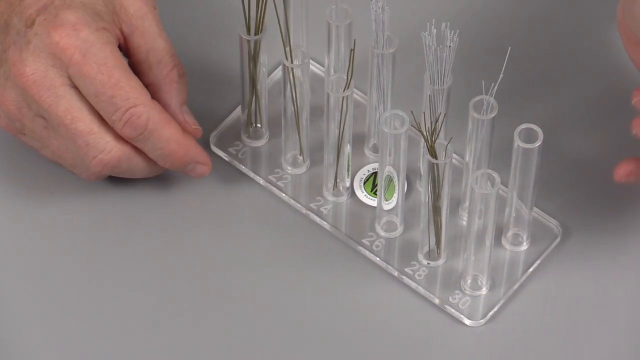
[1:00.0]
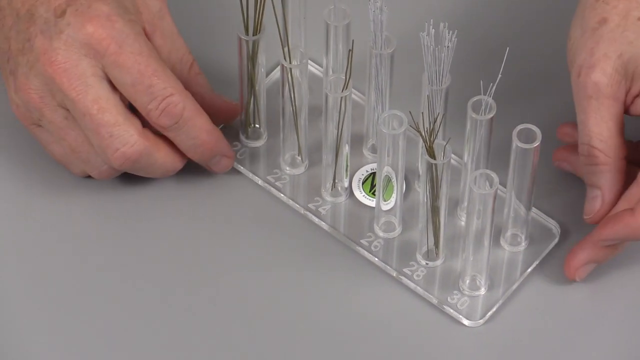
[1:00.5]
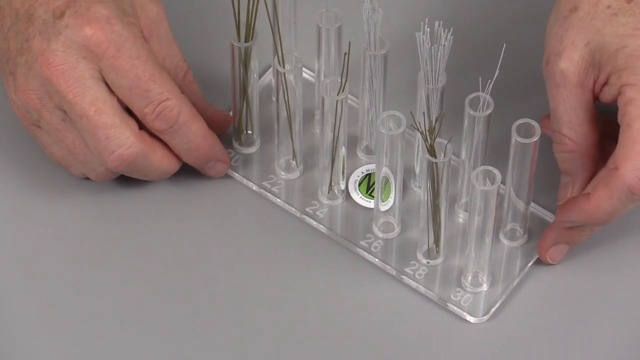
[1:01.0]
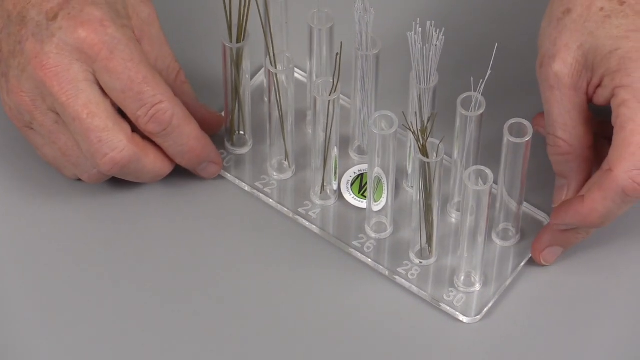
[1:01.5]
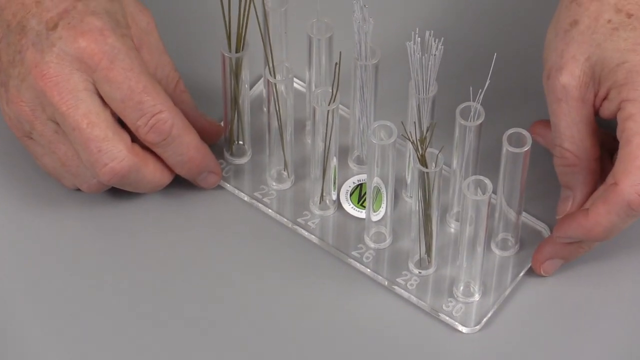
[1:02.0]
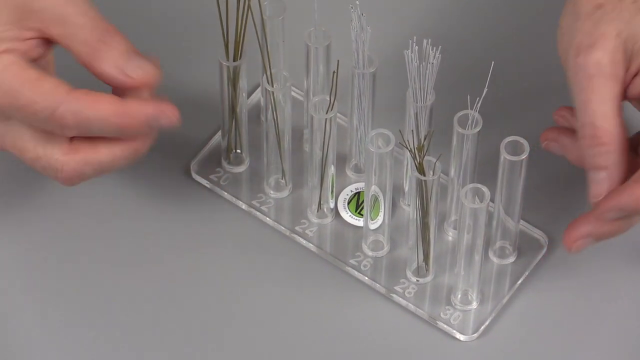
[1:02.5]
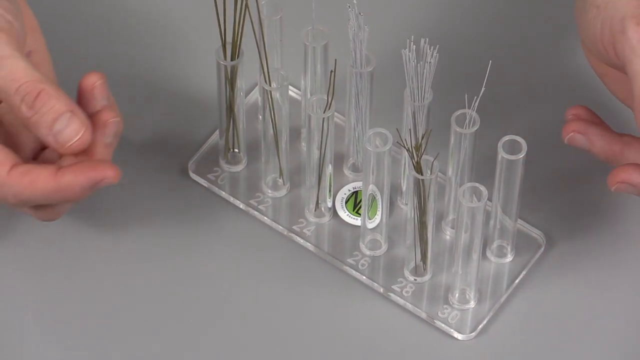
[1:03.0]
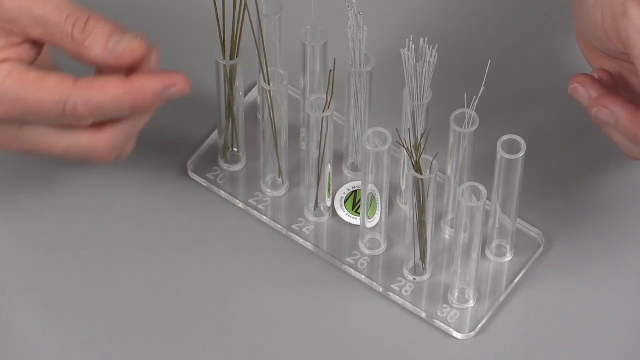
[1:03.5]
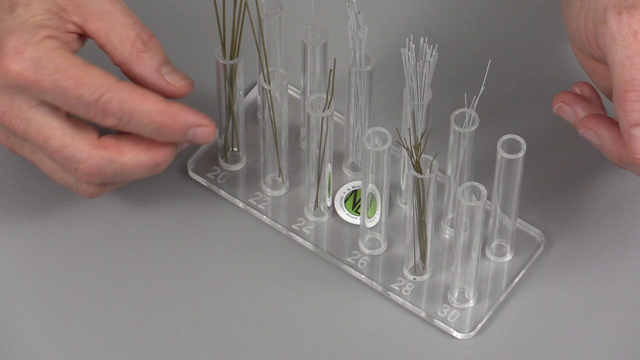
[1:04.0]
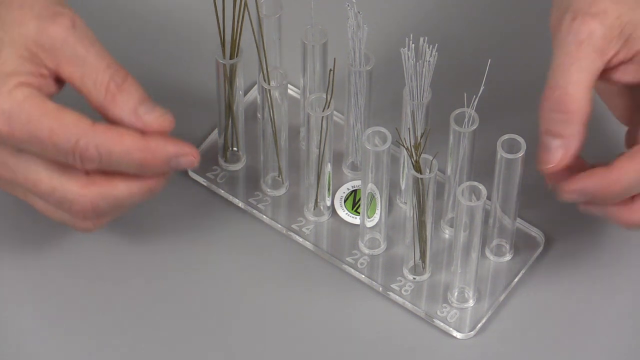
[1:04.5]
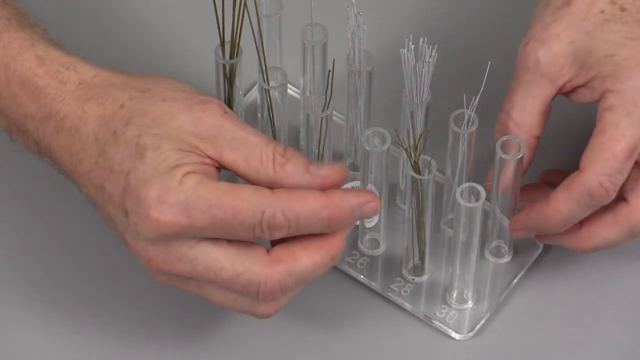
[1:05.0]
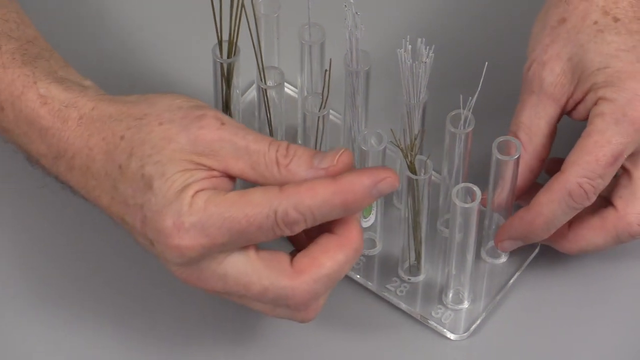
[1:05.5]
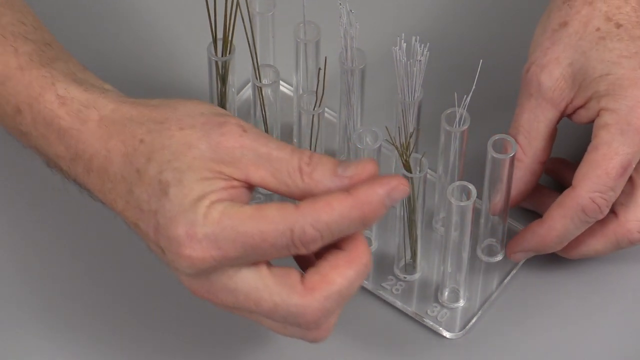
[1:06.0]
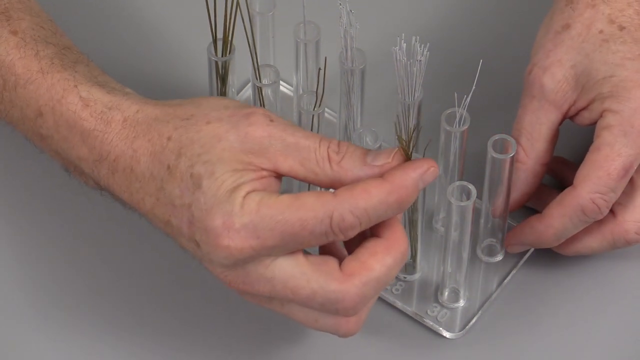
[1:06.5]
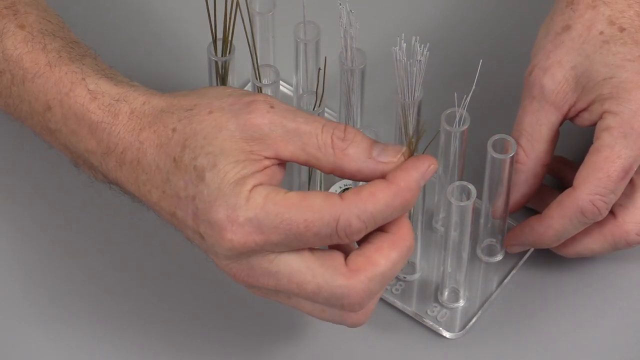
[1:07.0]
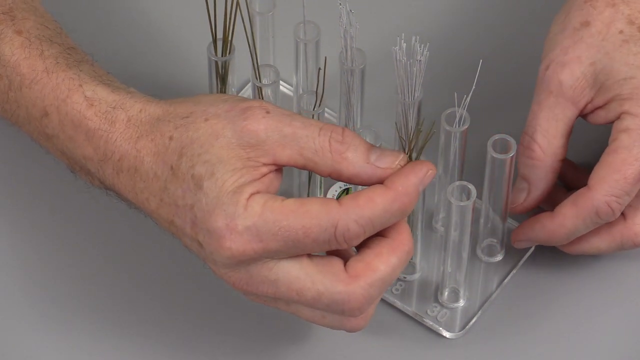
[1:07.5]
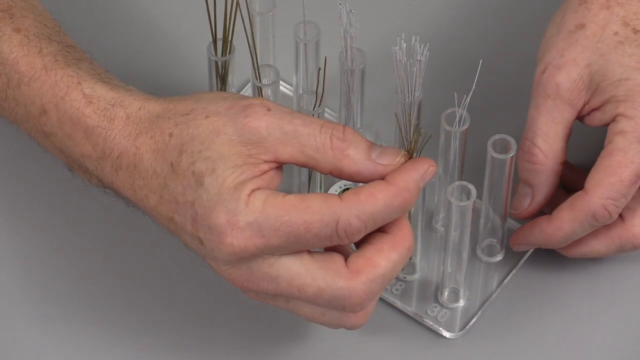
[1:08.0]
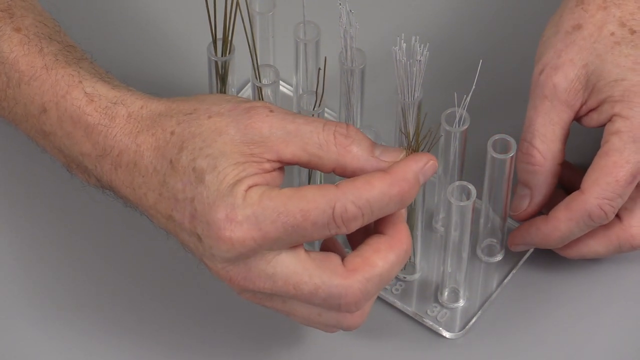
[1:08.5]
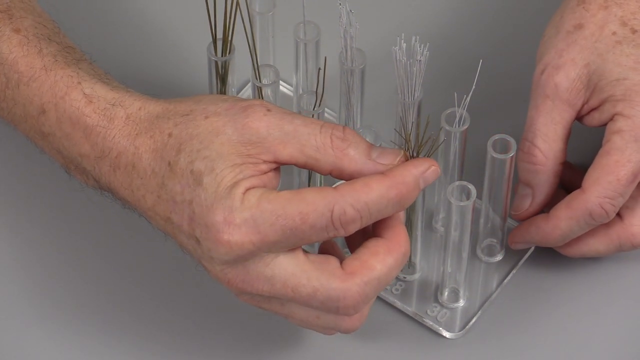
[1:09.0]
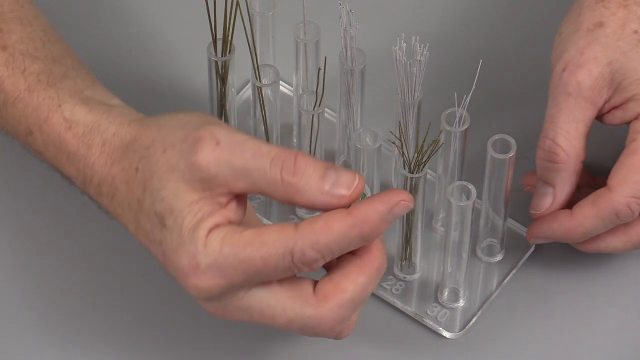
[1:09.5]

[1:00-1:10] A tray holds 12 vials: five are empty and seven have strands inside. Three vials have silver strands and four have brown or gray strands. The hands move the vials a little, and the fingers of the right hand attach brown strands to one of the vials, still demonstrating.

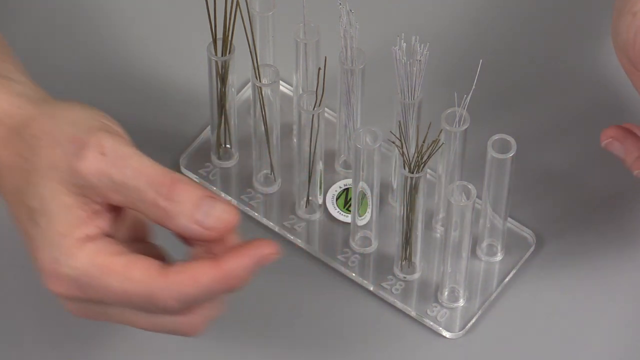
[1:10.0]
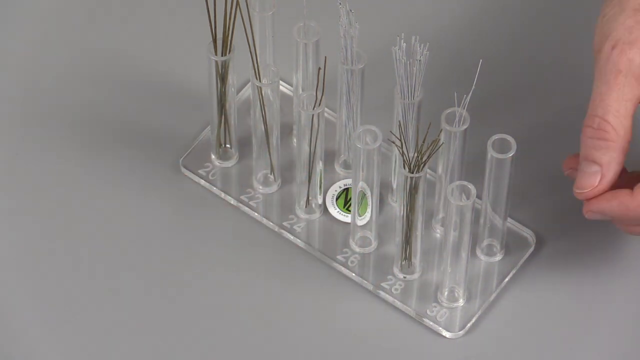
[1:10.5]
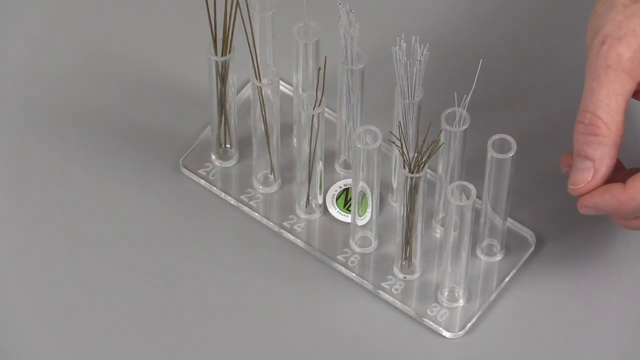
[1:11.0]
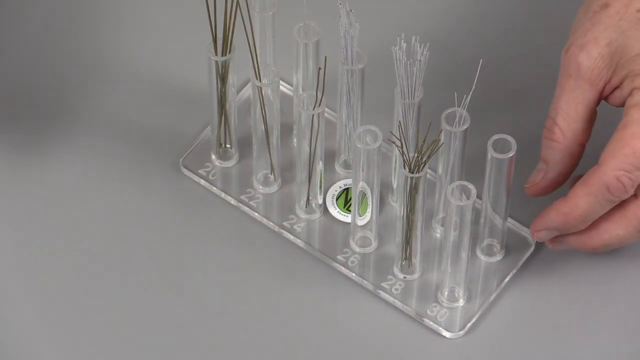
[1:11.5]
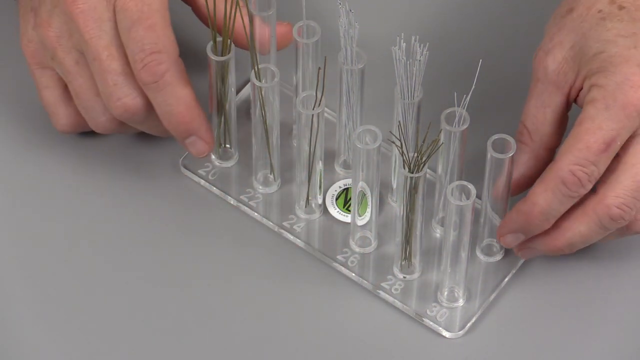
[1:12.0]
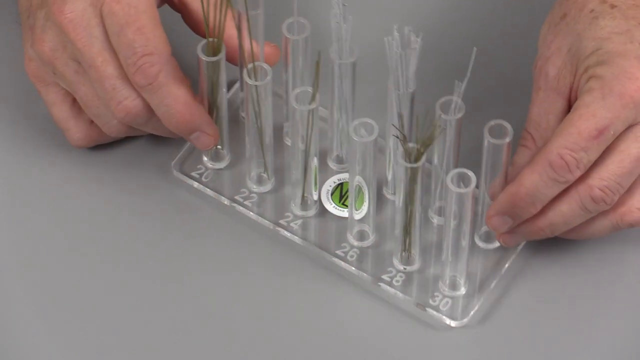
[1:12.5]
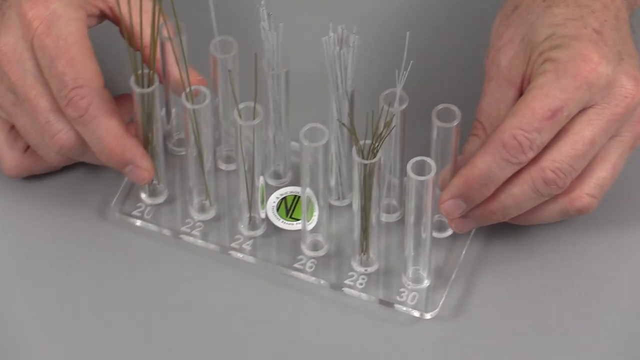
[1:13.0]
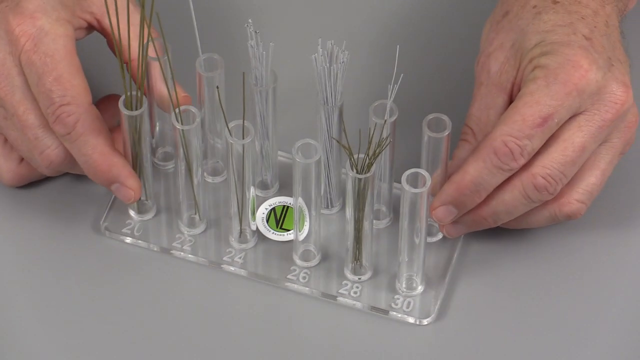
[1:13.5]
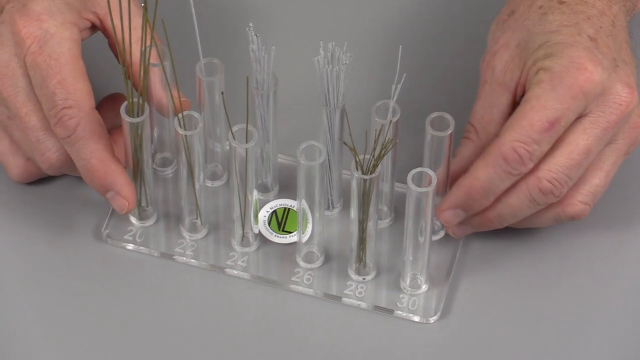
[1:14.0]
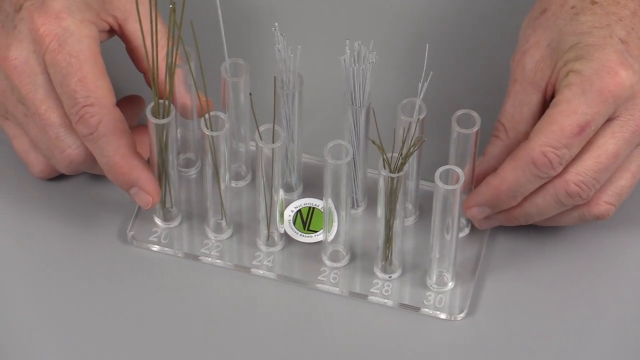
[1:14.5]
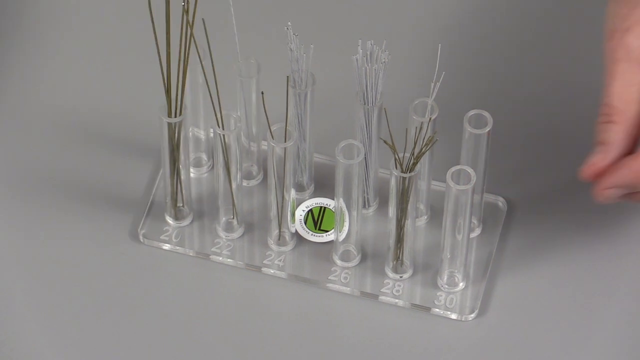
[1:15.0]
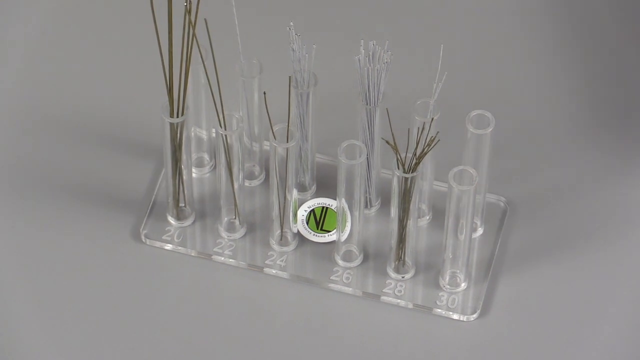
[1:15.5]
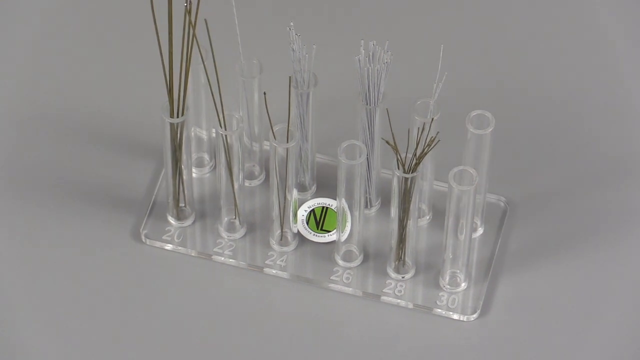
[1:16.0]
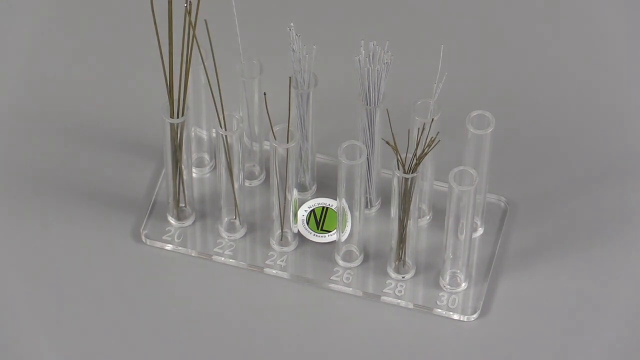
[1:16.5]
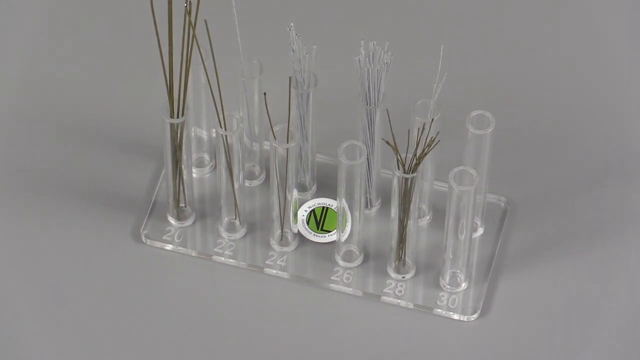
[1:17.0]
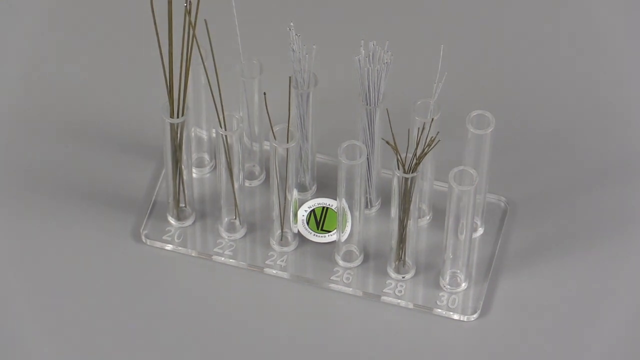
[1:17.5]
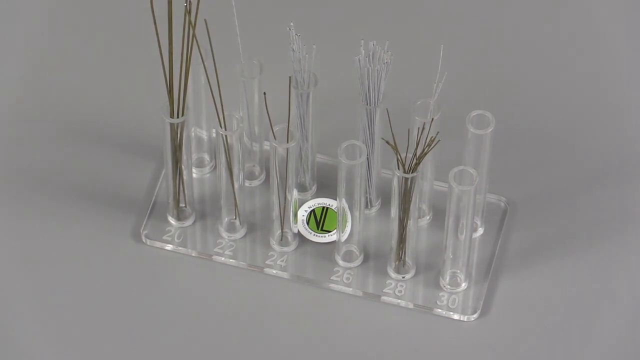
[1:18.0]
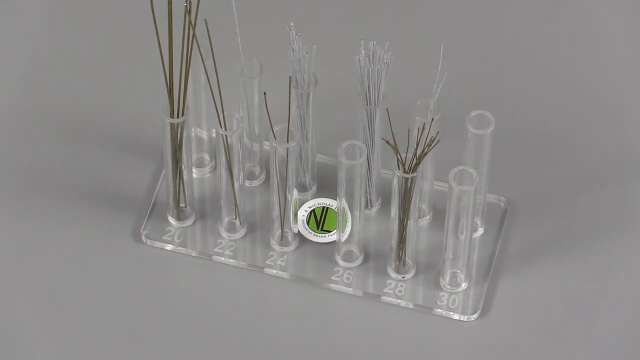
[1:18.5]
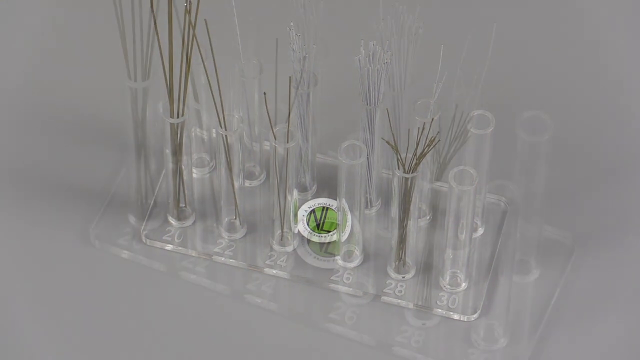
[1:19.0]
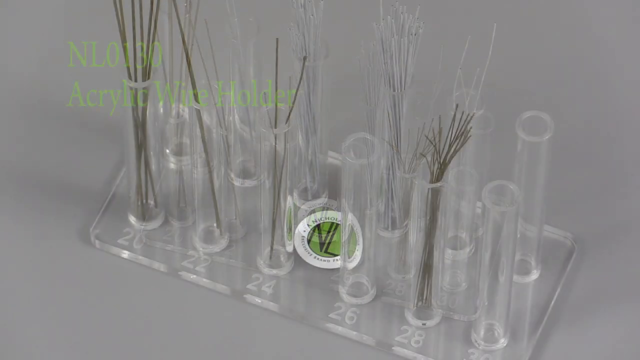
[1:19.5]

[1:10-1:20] The hands pick up the tray for a little while and then put it back on the surface. For a few seconds nothing happens in the video. Then words appear in a corner of the video reading "NL0130 acrylic wire holder." The hands continue to demonstrate how the holders are used.